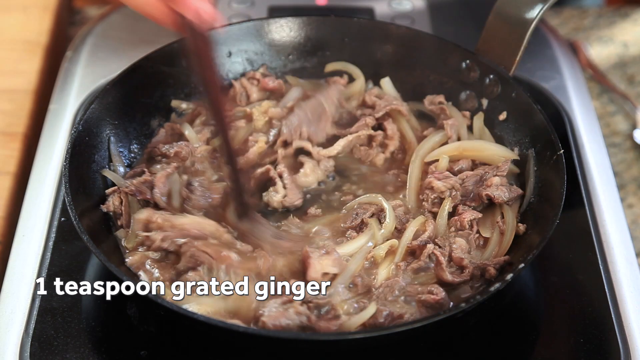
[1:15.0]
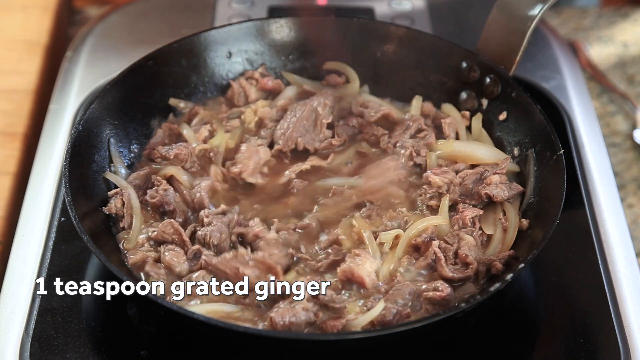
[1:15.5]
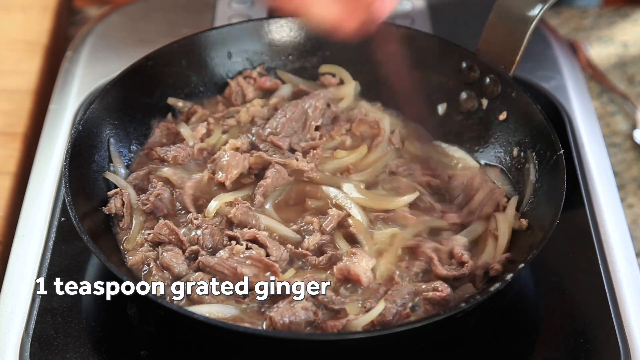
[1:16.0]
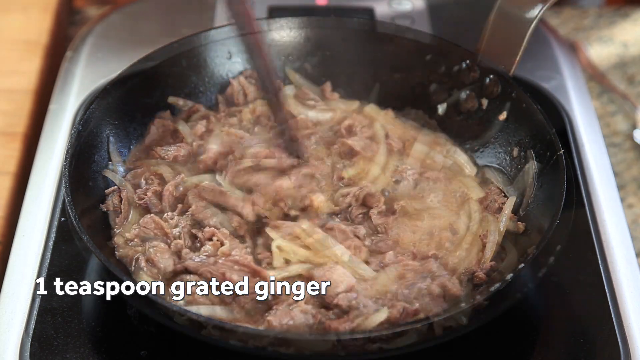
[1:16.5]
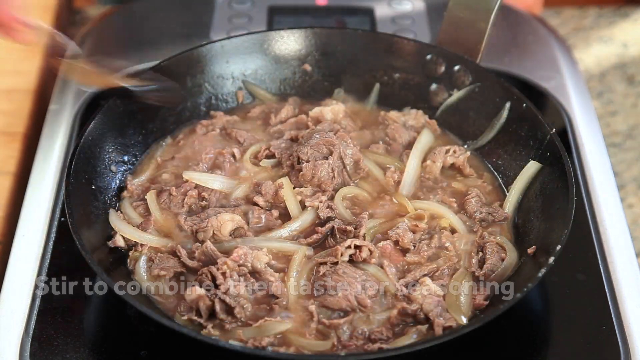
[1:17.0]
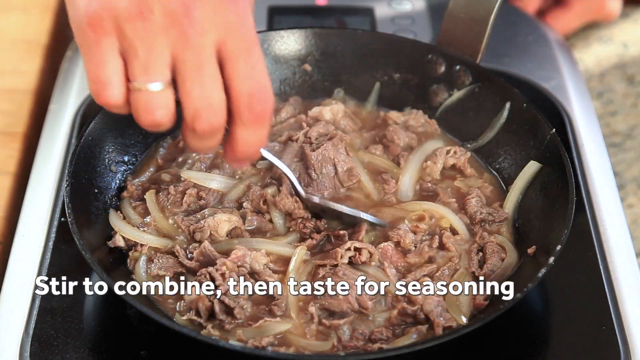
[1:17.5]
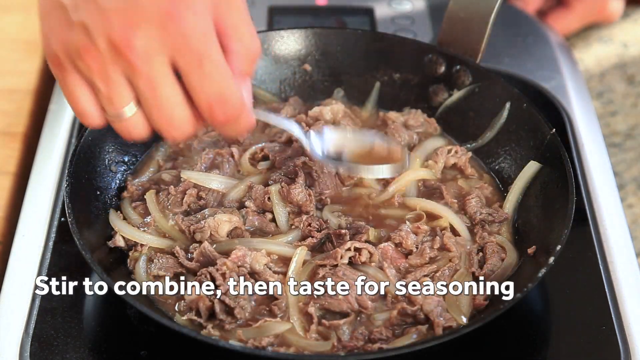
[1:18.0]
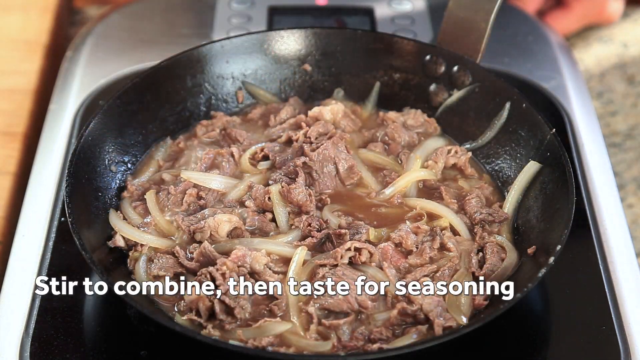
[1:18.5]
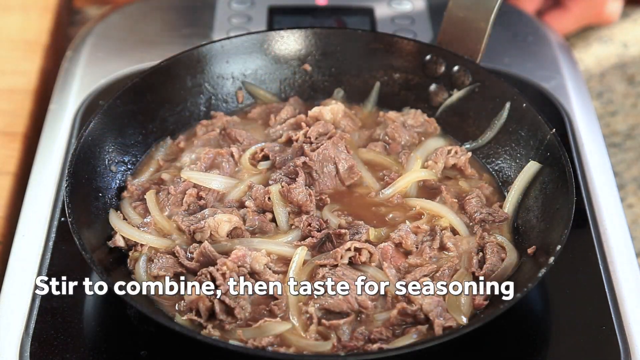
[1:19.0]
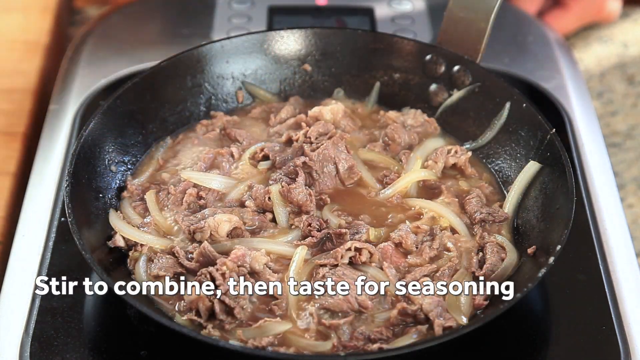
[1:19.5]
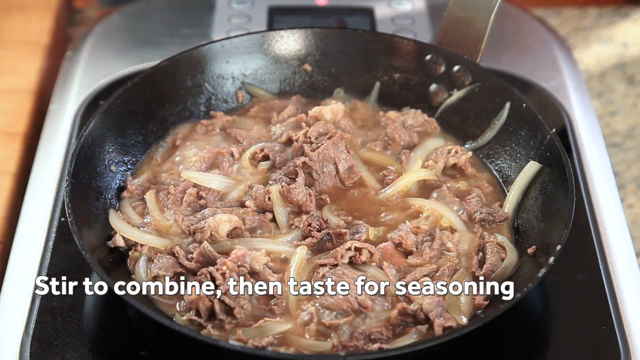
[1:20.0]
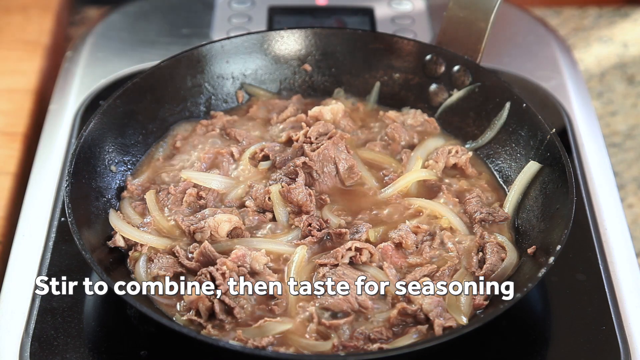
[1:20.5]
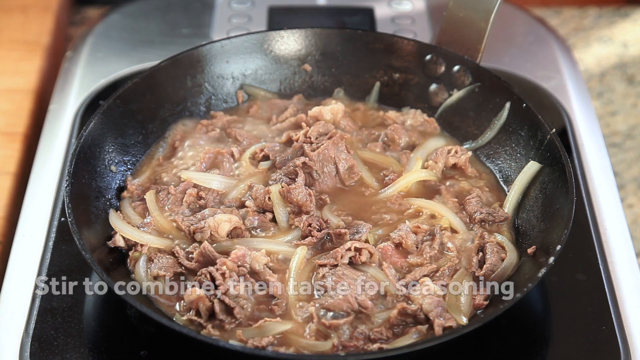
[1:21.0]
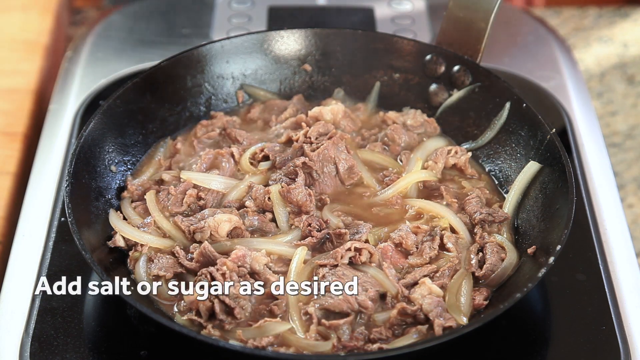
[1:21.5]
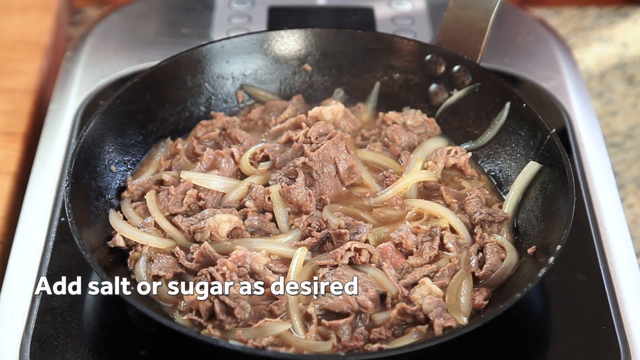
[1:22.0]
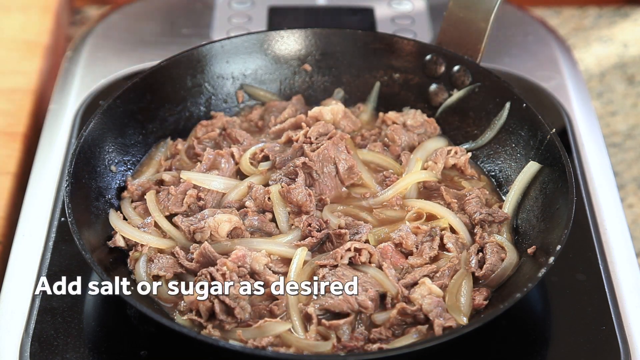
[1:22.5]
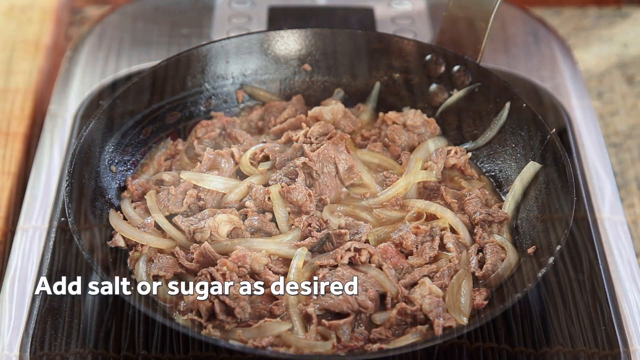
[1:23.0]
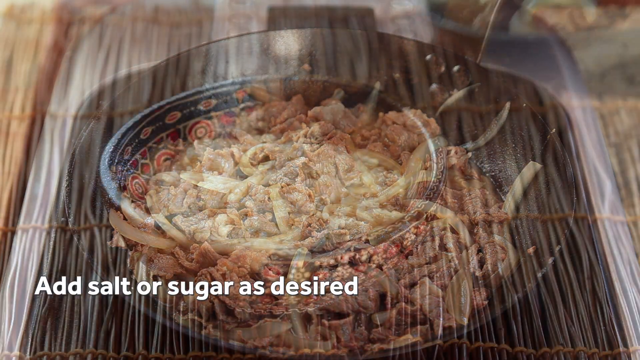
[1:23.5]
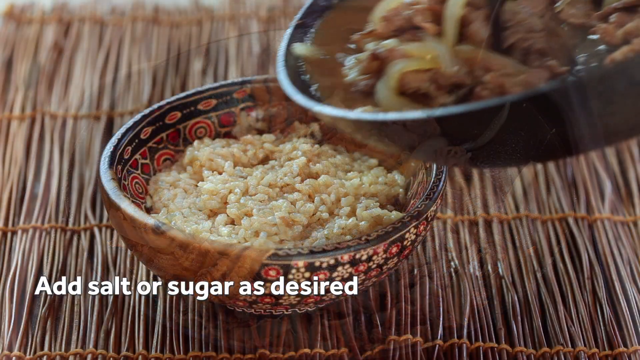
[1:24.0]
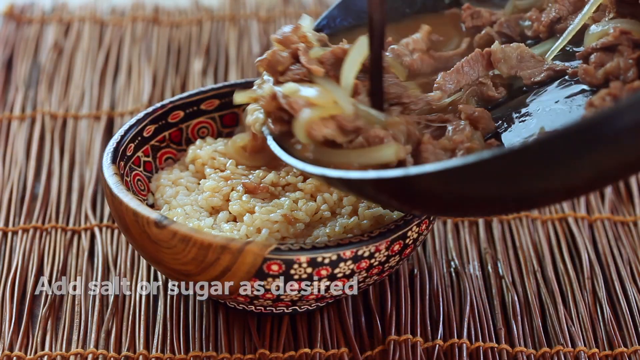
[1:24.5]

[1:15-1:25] A close-up shows the pan with the beef and sliced onions in it, with white text at the bottom reading "one teaspoon grated ginger", and the brown chopsticks appear. A spoon goes into the pan to take out some of the sauce, as if the chef is tasting it, and white lettering reads "stir to combine, then taste for seasoning". The mixture bubbles and the text reads "add salt or sugar as desired". Then, very briefly, the scene leaves the pan: what looks like a bowl of rice on a straw mat appears, and the meat and onion mixture is scooped into it with the dark wooden chopsticks. Everything looks Japanese in design. The text along the bottom left-hand corner explains each step.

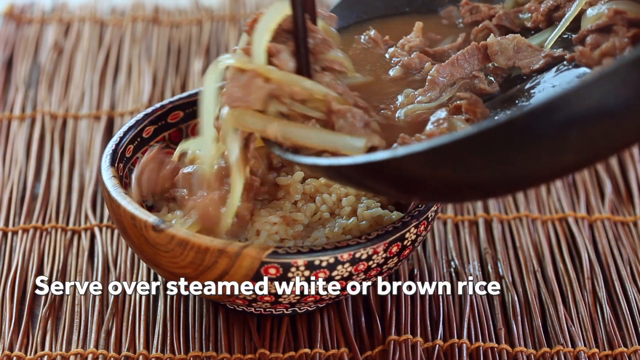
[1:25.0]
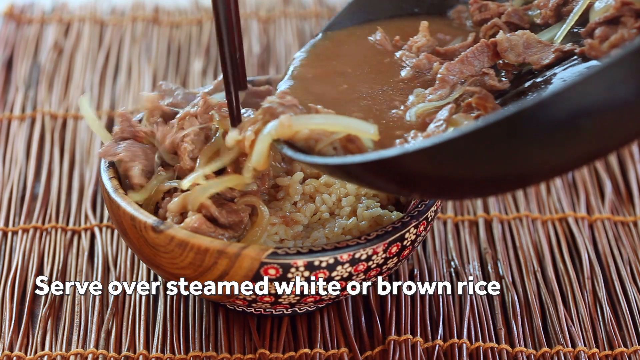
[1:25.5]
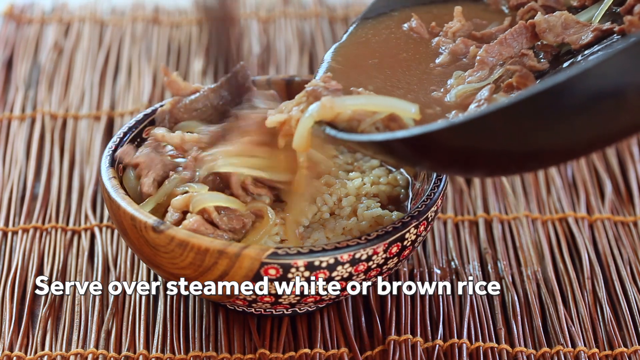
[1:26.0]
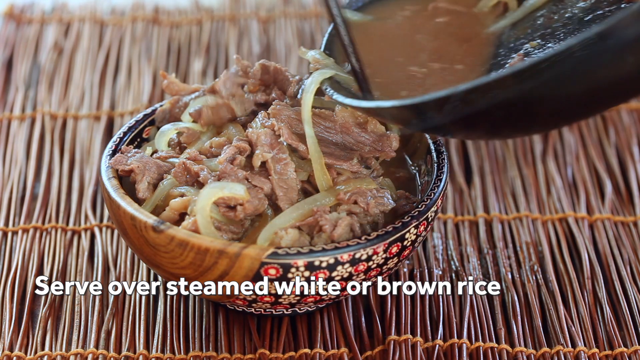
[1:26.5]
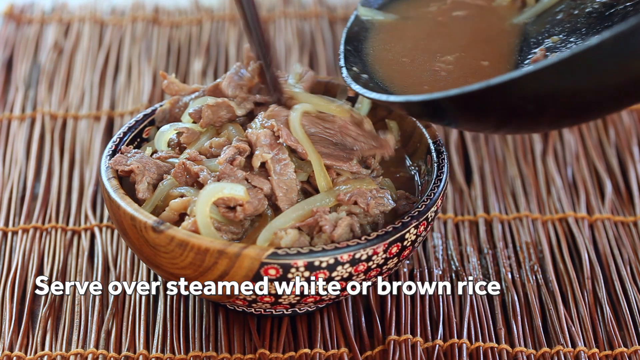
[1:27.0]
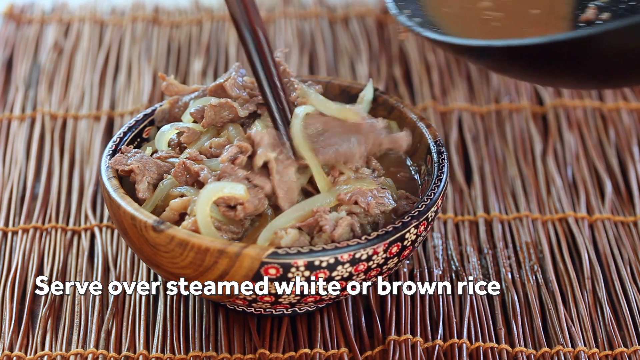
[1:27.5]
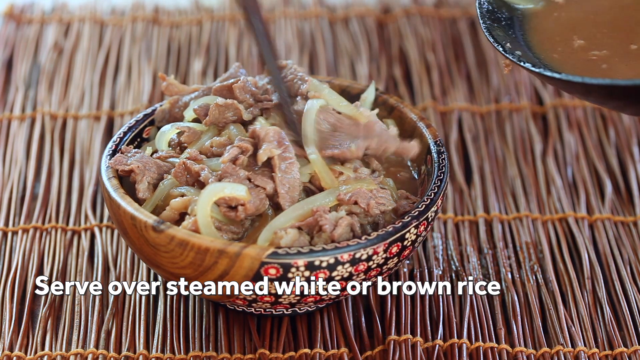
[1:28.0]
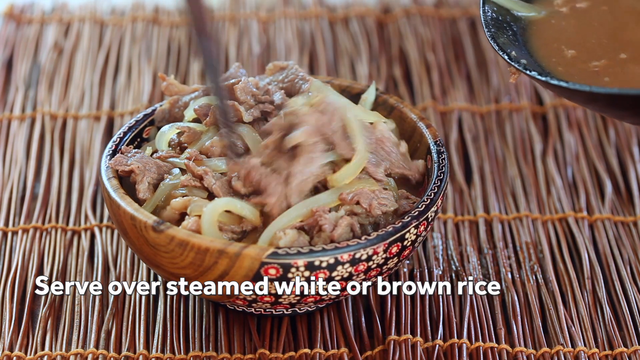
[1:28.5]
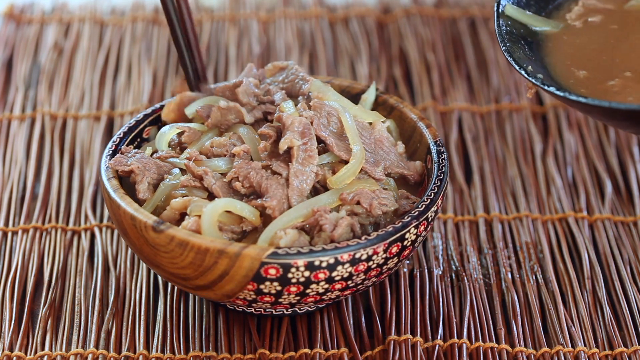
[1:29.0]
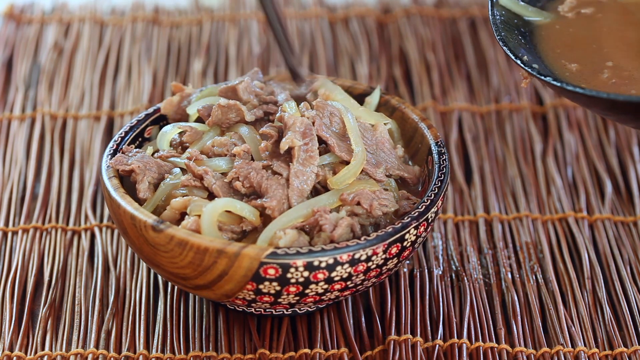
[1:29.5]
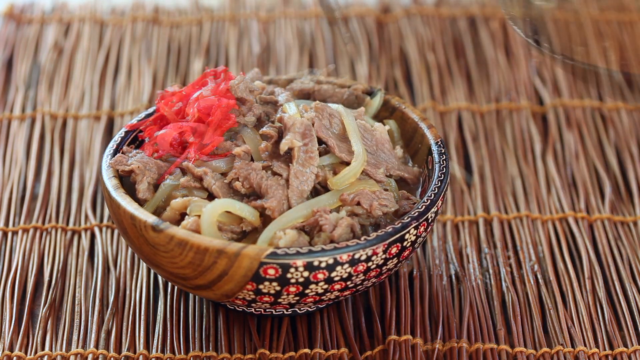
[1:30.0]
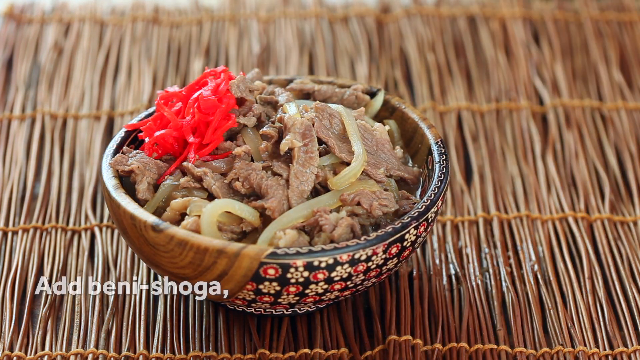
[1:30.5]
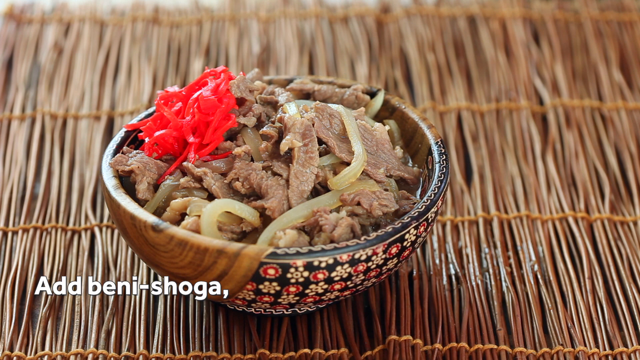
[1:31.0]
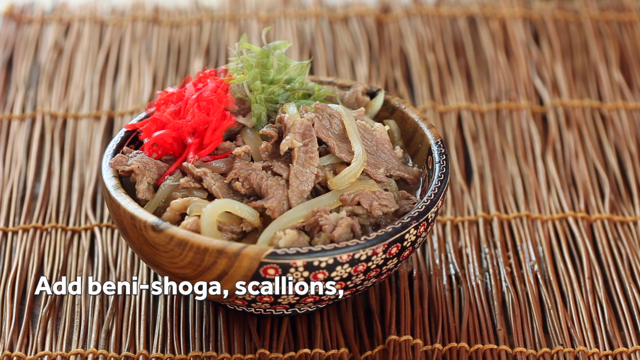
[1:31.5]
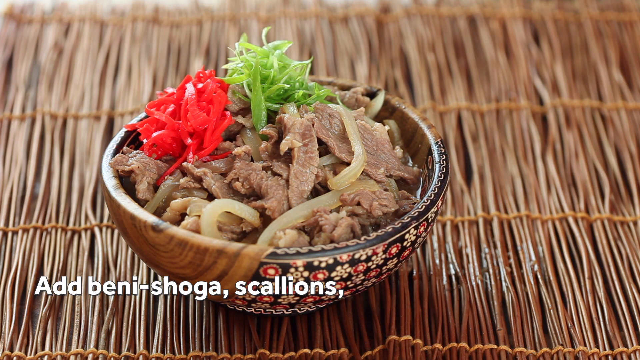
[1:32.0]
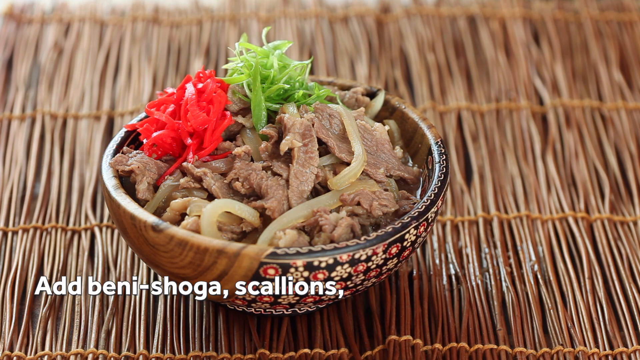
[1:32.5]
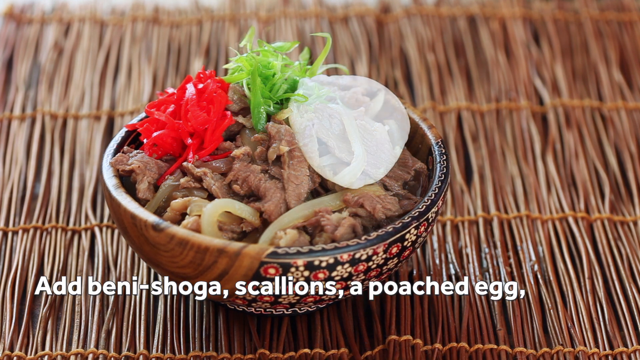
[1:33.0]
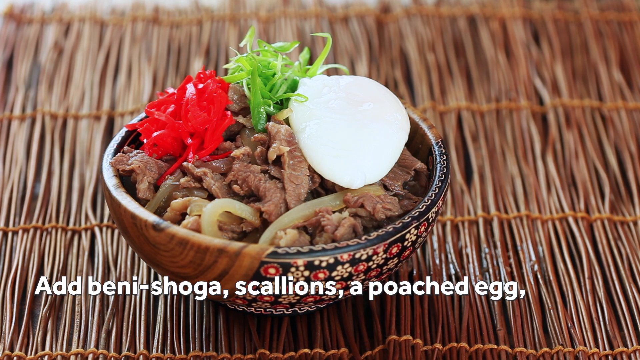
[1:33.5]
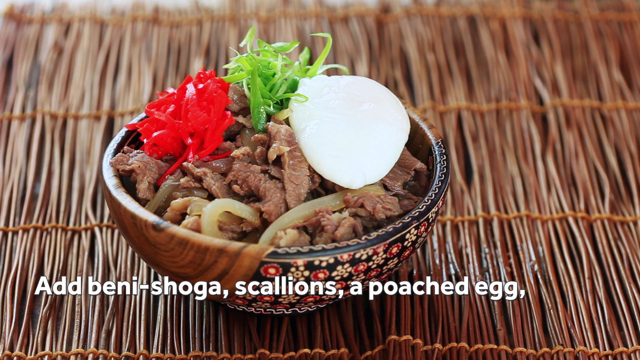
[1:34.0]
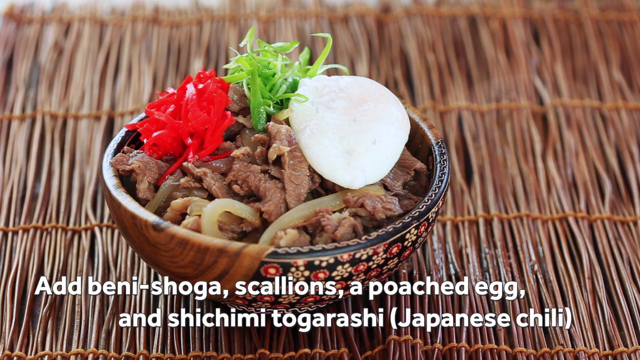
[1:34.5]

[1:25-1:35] The bowl of rice is on the straw mat as the beef and onion mixture is scooped in. The bowl is very ornate and Japanese-looking, with very small decorations that look like flowers all around the right half and a wooden-looking design on the left half, the rest painted. The chopsticks move all around the meat. Then still shots appear one at a time of different ingredients going into the bowl. After the meat is in, white text reads "serve over steamed white or brown rice". Bits of a red julienned vegetable go on, then some green herbs, then what looks like the soft-boiled egg with a dusting of seeds resembling everything bagel seasoning, though probably not that. The bowl then looks finished.